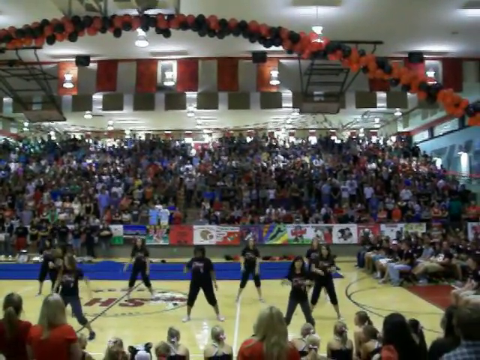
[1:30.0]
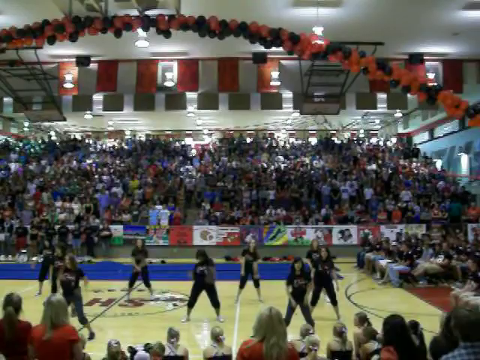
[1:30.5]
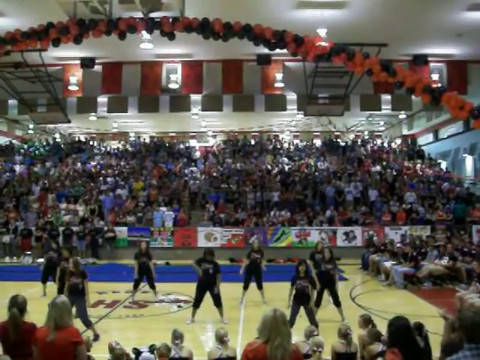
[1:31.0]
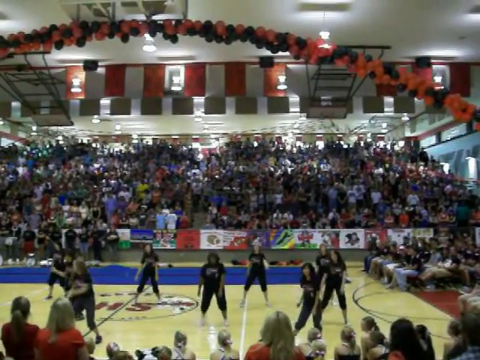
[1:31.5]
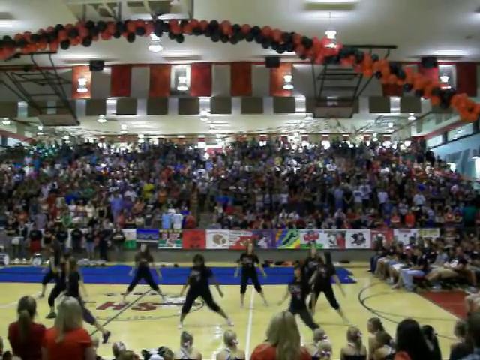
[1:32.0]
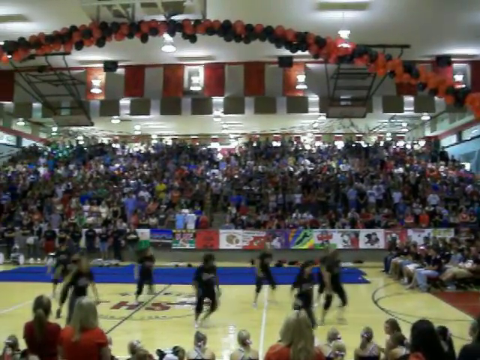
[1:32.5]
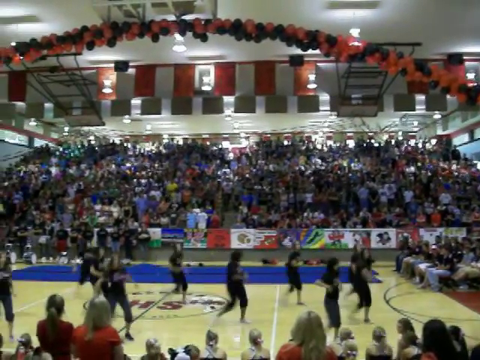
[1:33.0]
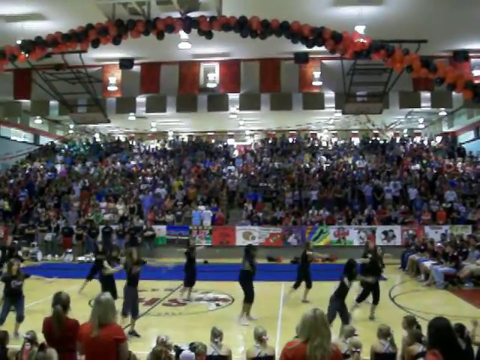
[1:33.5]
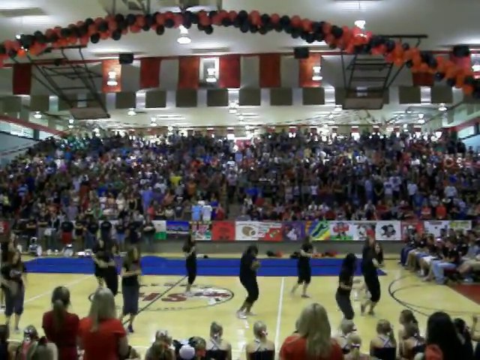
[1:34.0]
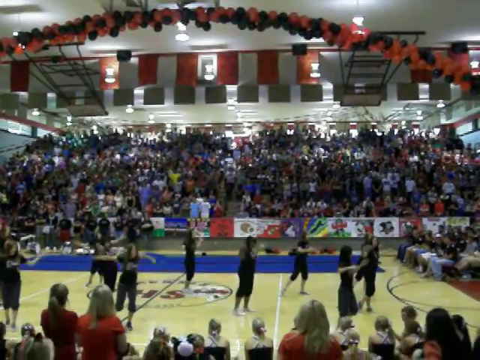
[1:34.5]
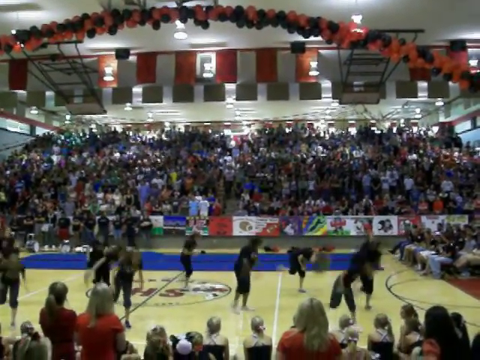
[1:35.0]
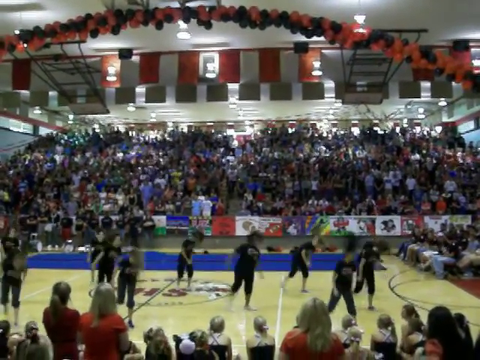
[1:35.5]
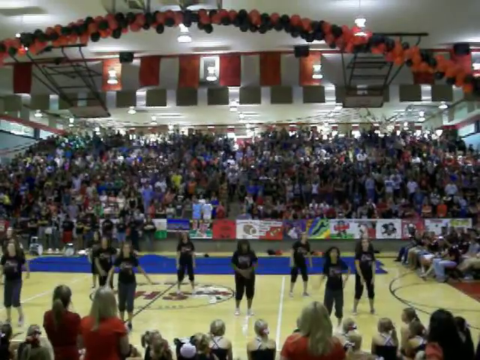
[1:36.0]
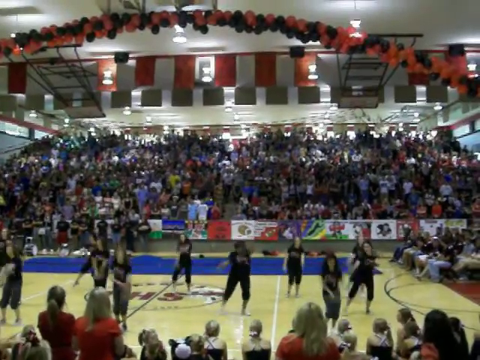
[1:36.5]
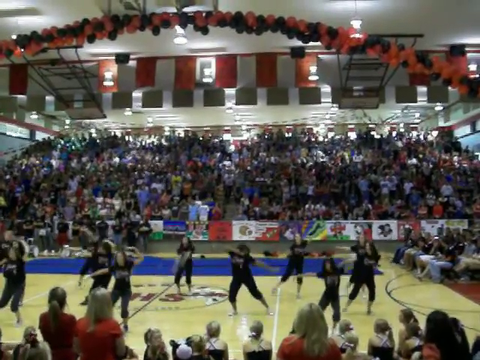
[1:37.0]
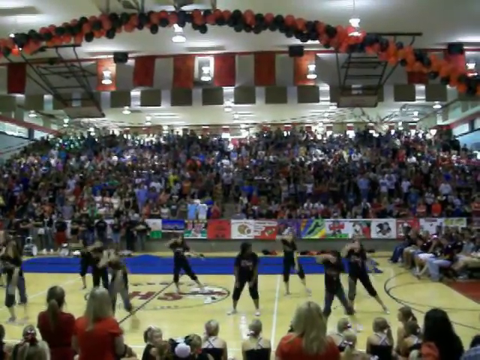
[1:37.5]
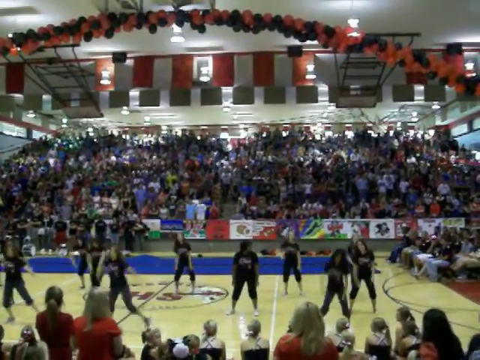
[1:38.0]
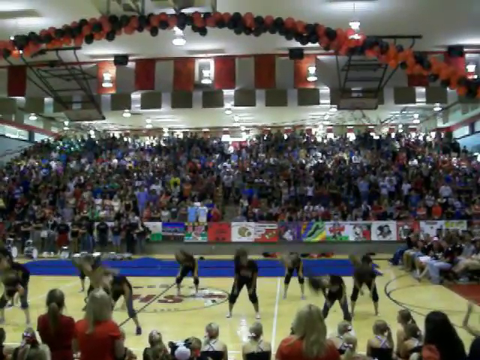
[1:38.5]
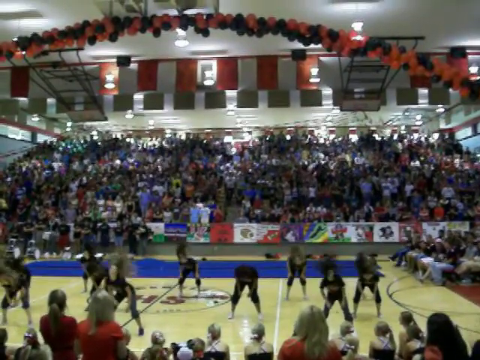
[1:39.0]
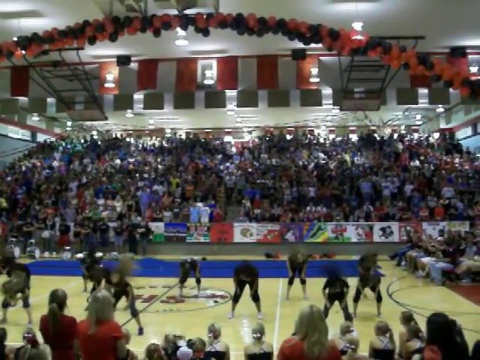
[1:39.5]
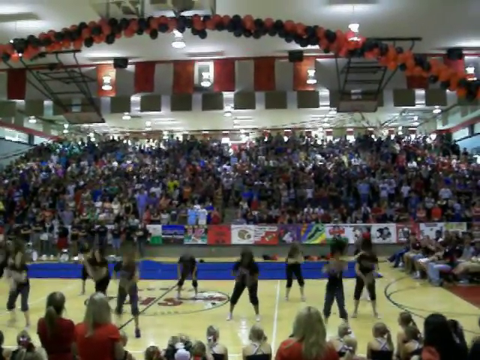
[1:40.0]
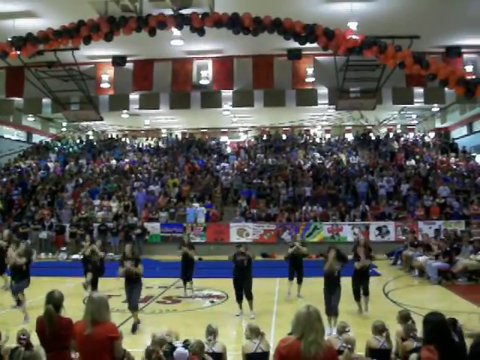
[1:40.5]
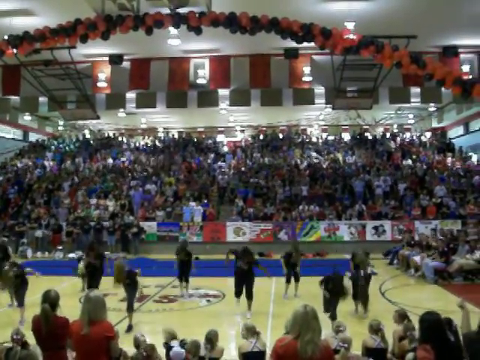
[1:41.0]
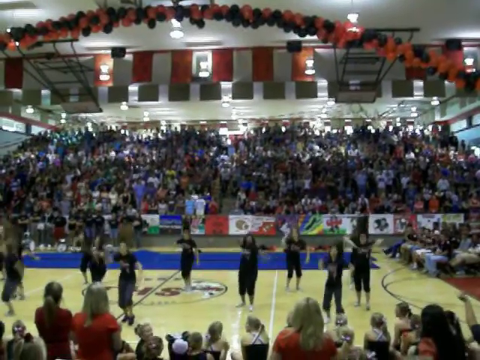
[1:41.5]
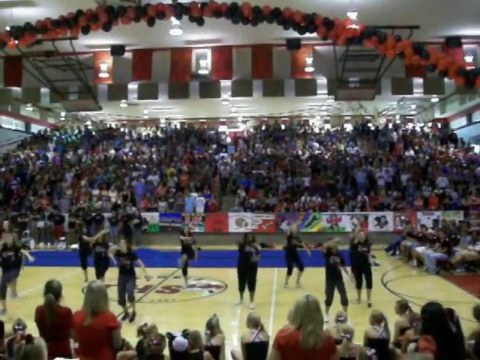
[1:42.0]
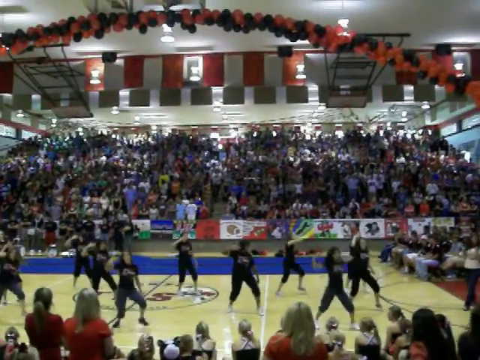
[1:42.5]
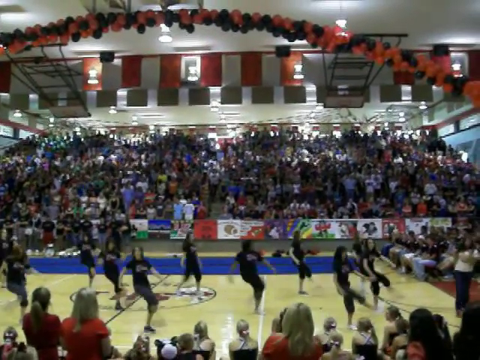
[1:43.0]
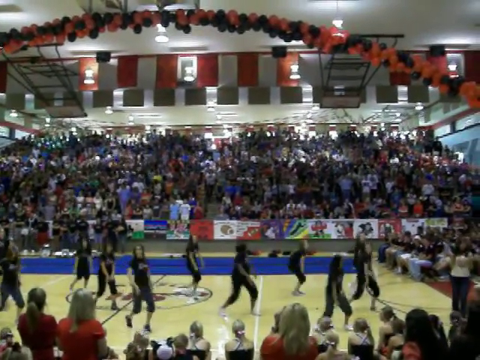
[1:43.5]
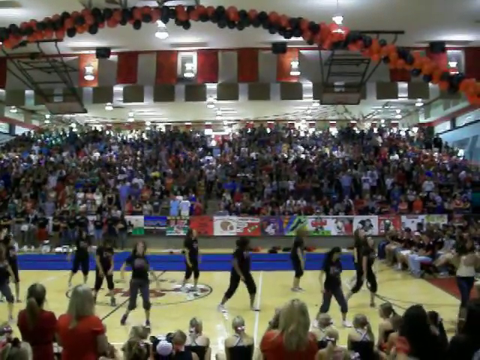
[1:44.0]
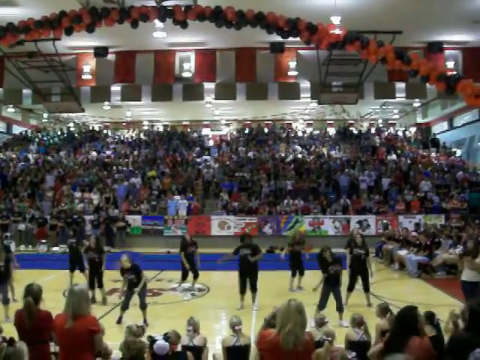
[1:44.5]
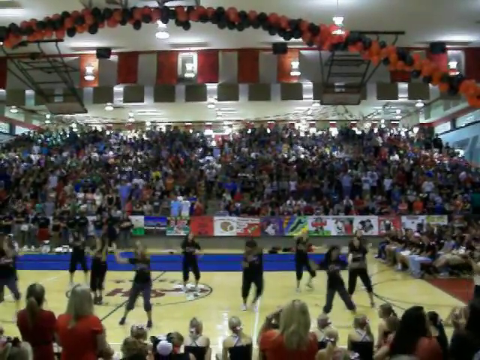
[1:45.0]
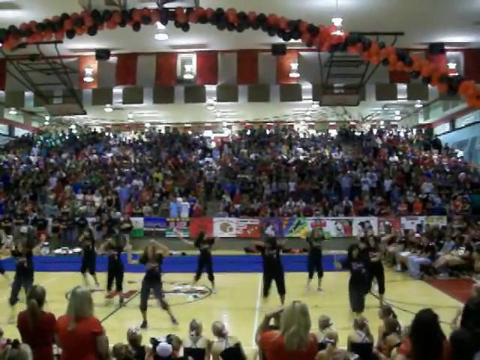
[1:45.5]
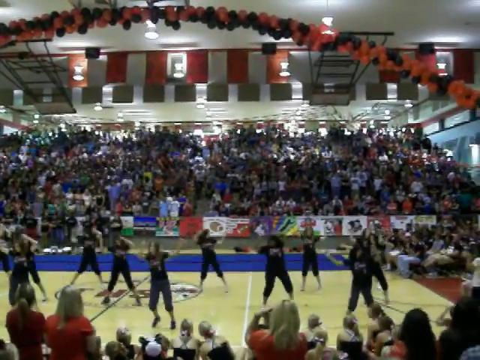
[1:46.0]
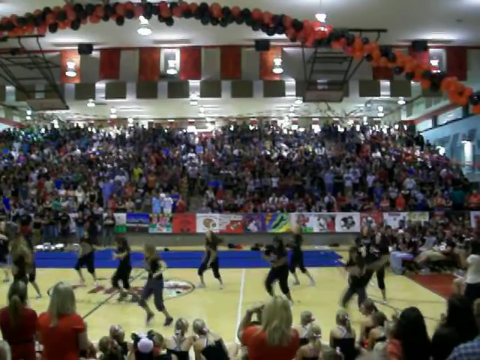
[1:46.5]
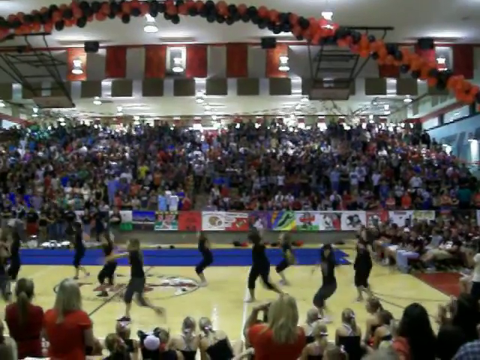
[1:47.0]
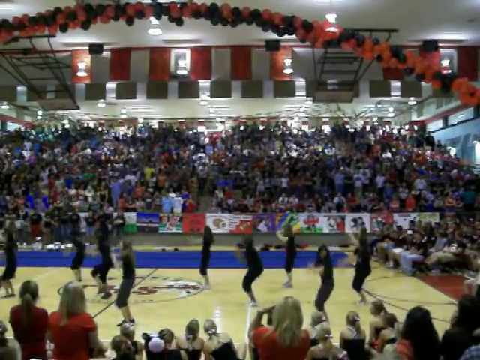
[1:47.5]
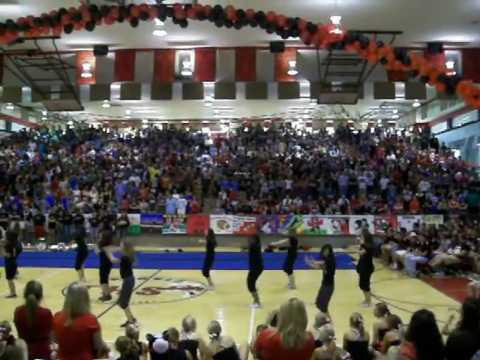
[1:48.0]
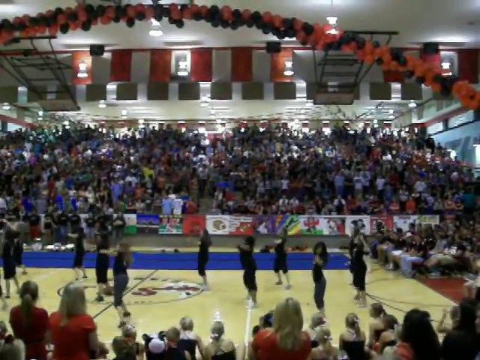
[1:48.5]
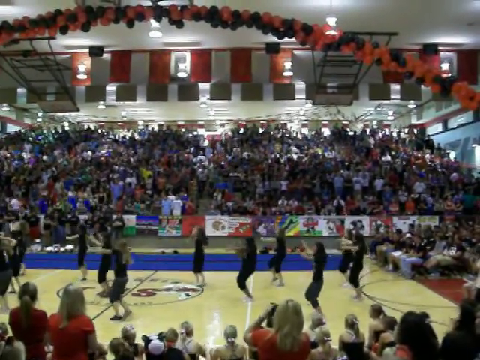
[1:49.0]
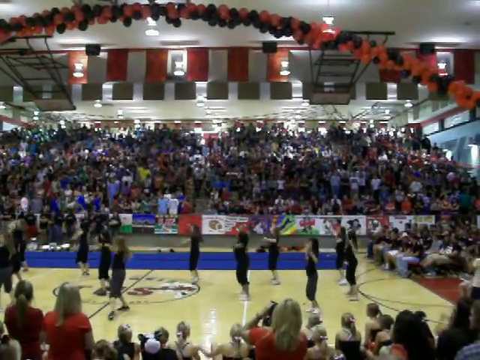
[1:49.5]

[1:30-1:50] What appears to be a cheerleading squad, pep squad or dance team does a routine on a gym floor, possibly at a college or high school. The camera faces a large audience of probably a few hundred people. Some people are also on the other side, sort of in front of the camera, so there may be stands on both sides of the gym. The squad wears black shirts and perhaps black leggings. They dance in unison, doing hand movements in a fairly simple dance, going to the left and to the right. Some people appear to be seated on the side, on the court, so it is perhaps an assembly.